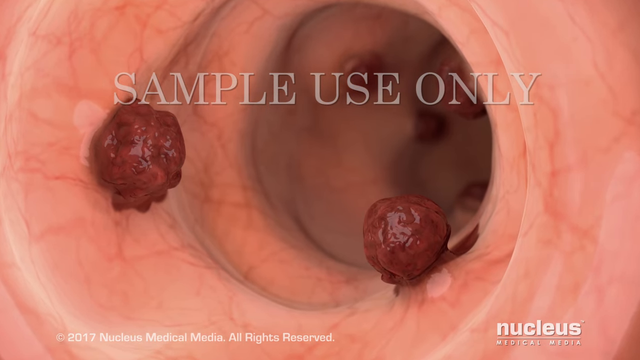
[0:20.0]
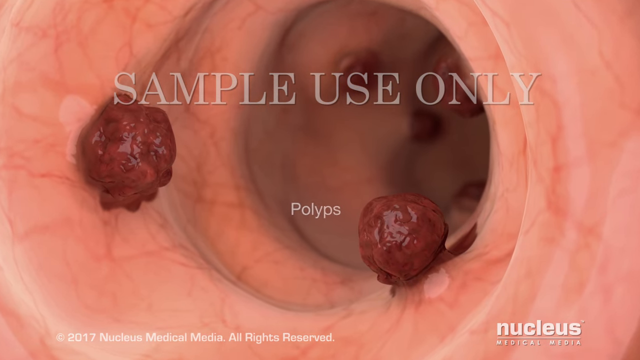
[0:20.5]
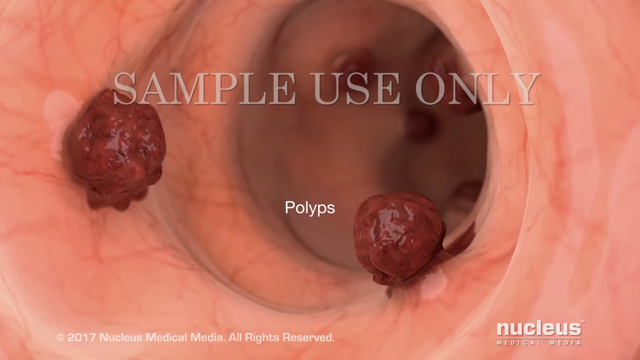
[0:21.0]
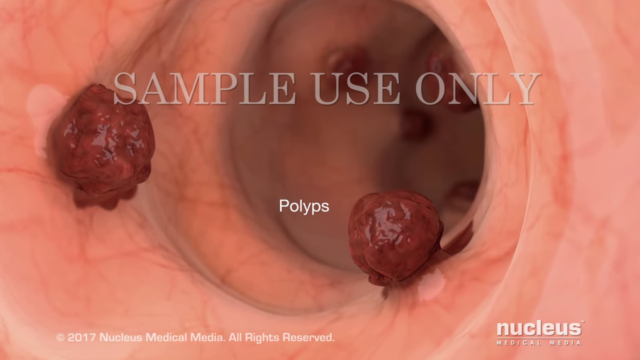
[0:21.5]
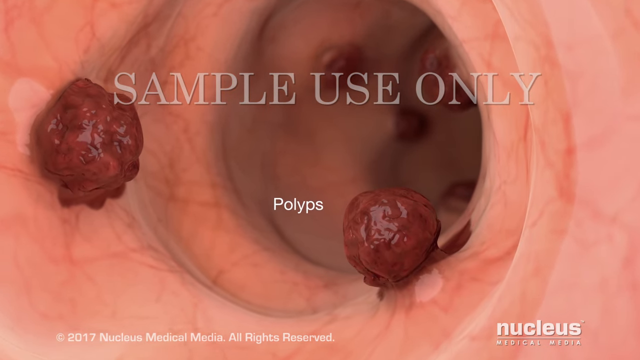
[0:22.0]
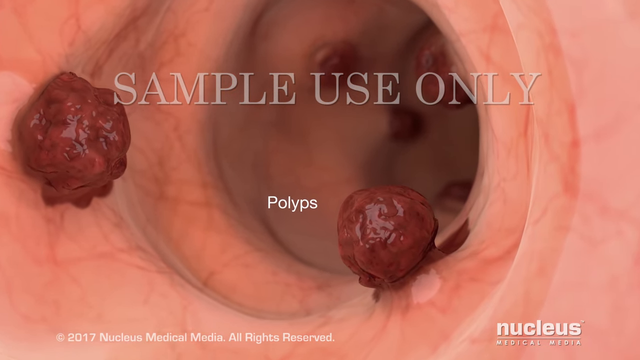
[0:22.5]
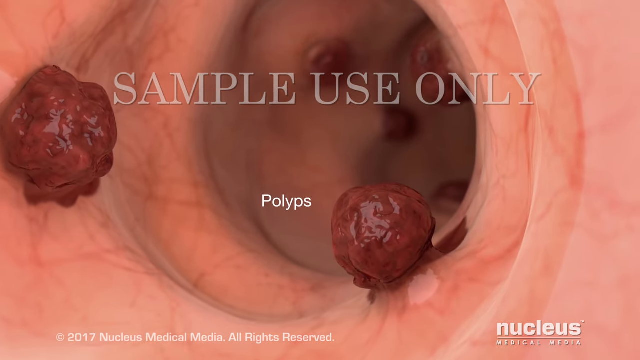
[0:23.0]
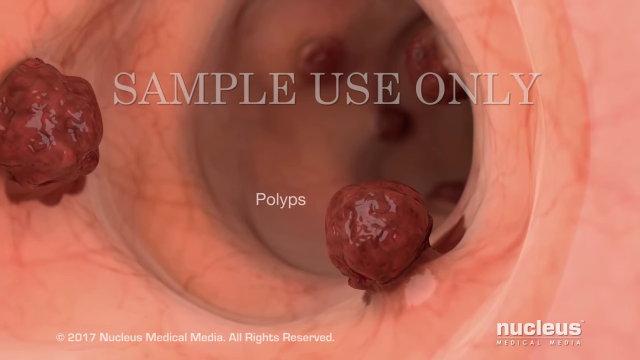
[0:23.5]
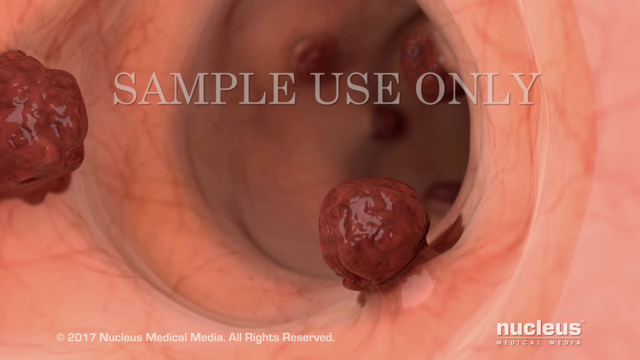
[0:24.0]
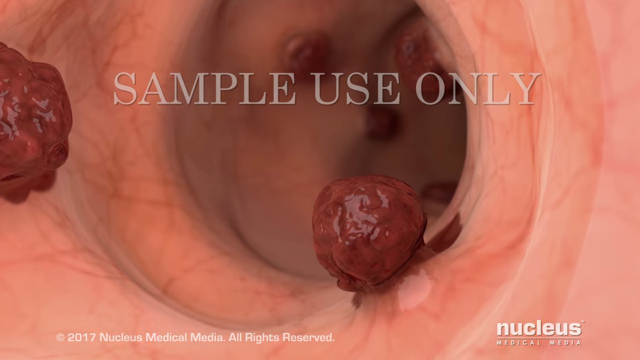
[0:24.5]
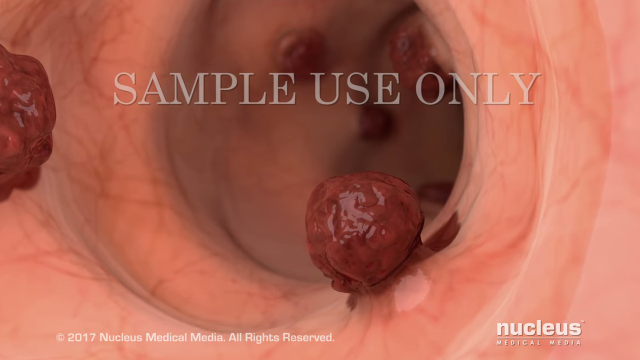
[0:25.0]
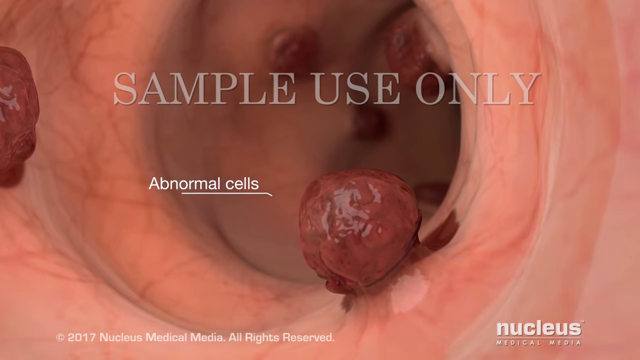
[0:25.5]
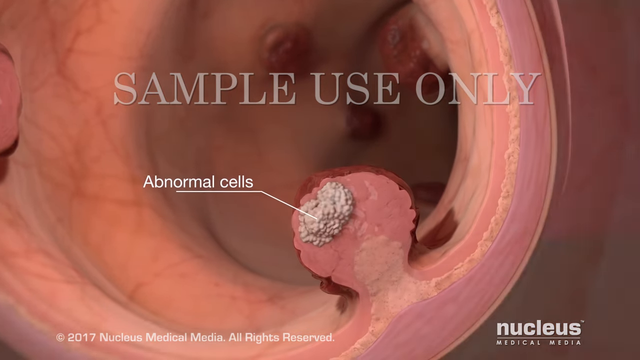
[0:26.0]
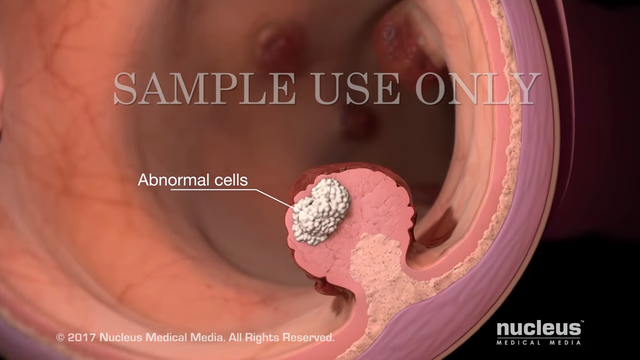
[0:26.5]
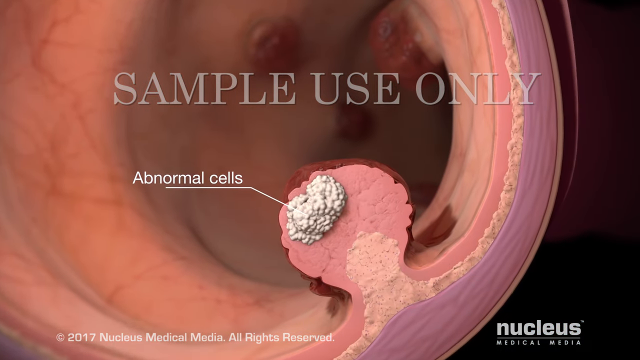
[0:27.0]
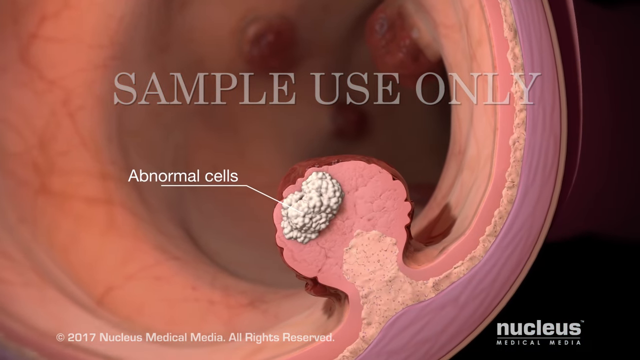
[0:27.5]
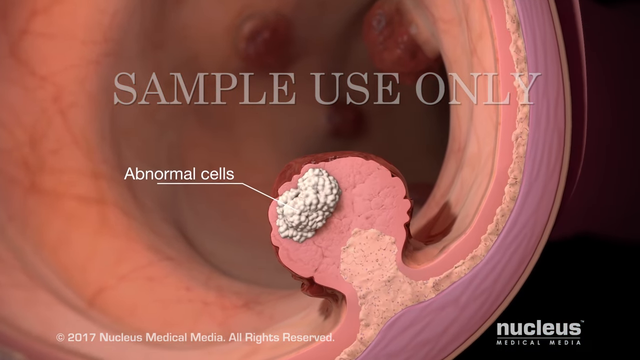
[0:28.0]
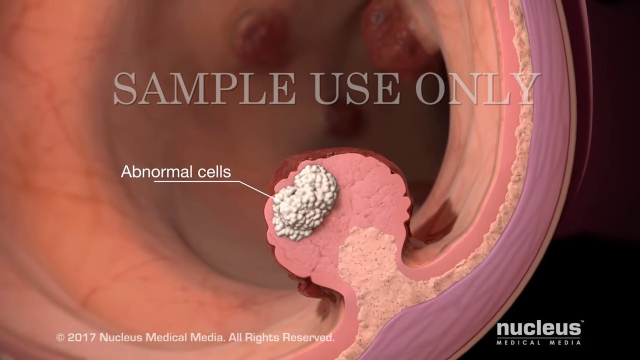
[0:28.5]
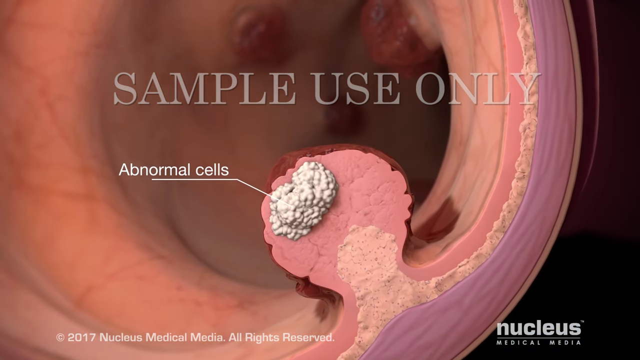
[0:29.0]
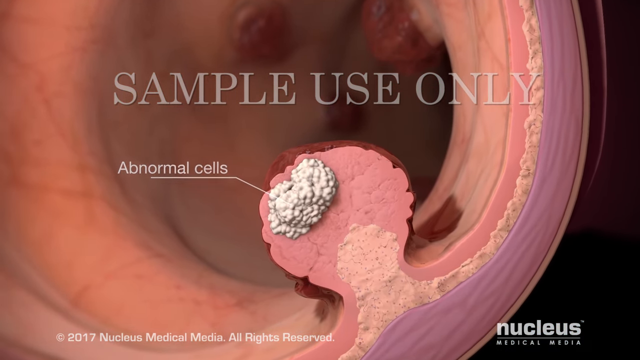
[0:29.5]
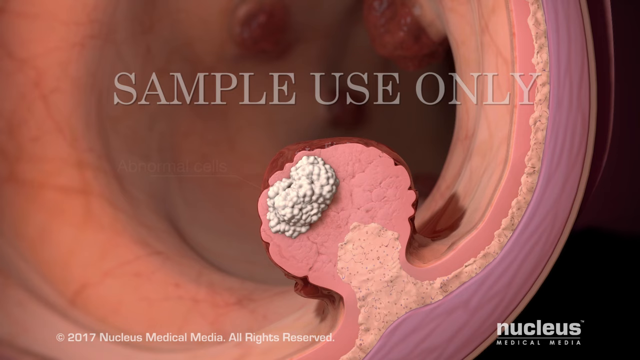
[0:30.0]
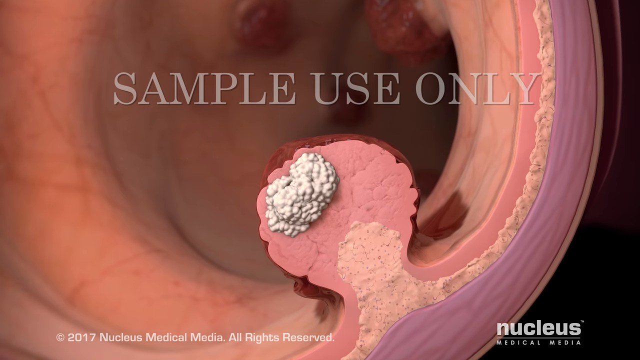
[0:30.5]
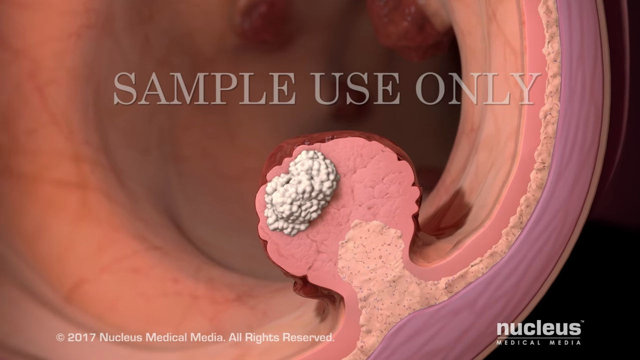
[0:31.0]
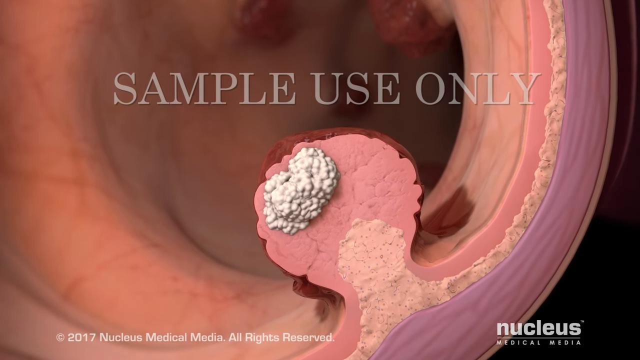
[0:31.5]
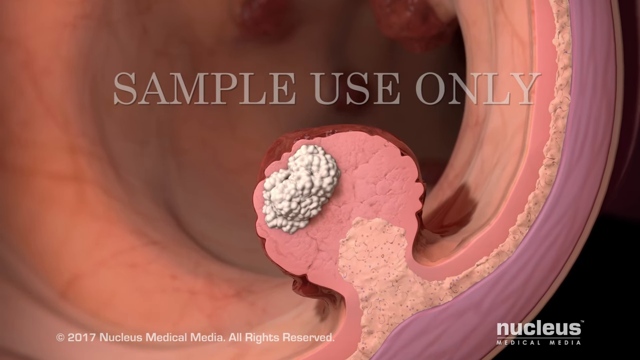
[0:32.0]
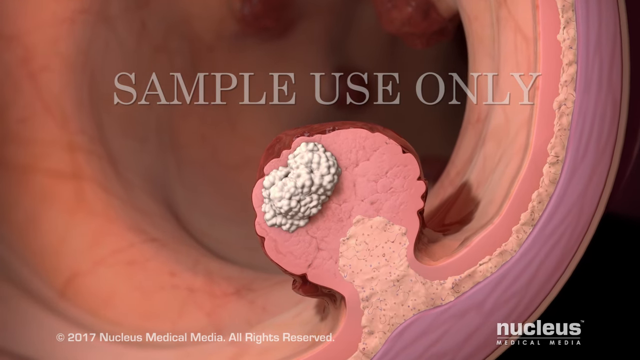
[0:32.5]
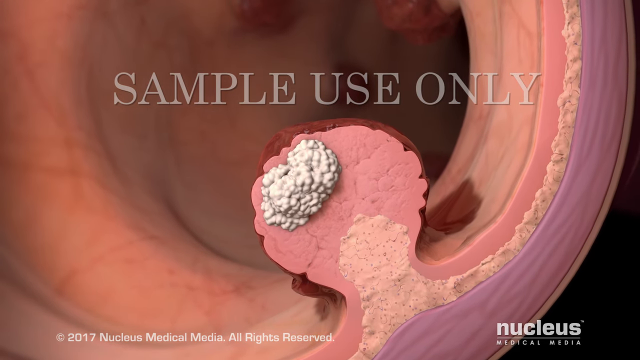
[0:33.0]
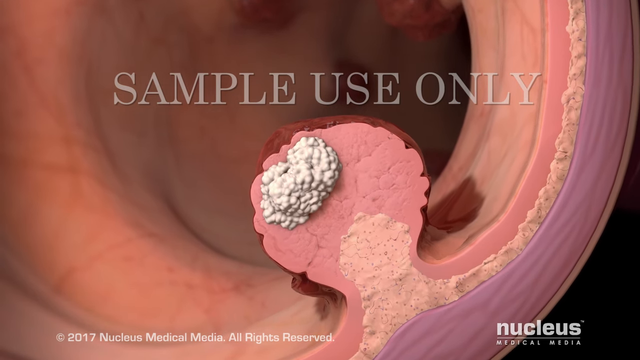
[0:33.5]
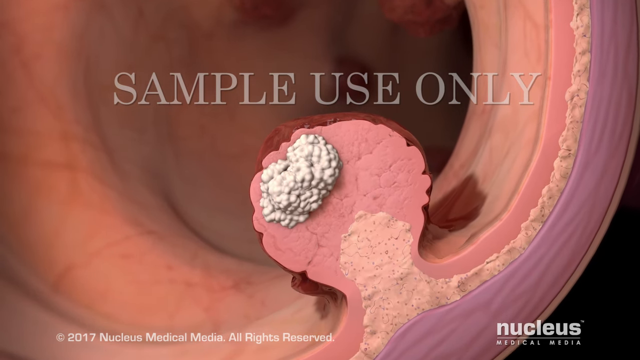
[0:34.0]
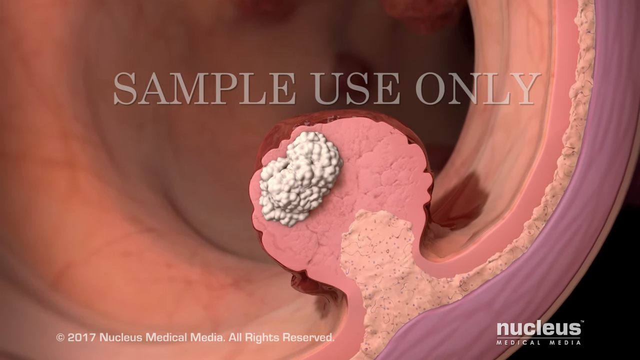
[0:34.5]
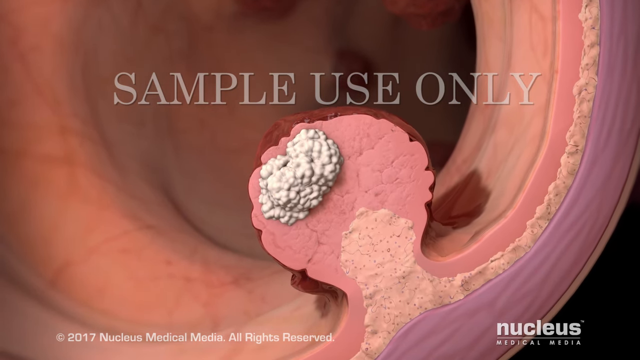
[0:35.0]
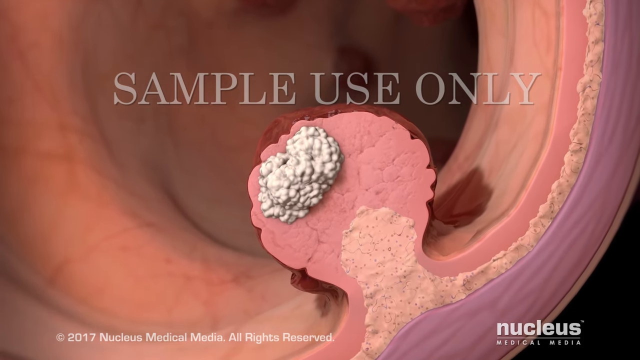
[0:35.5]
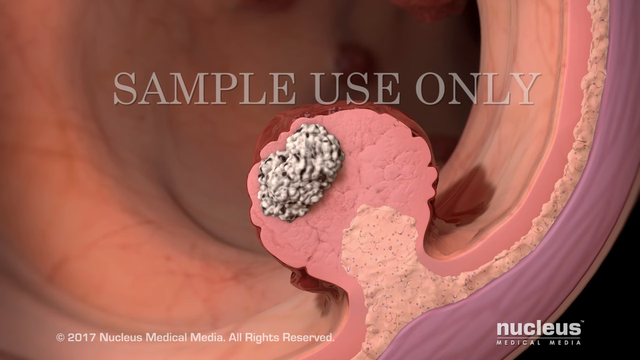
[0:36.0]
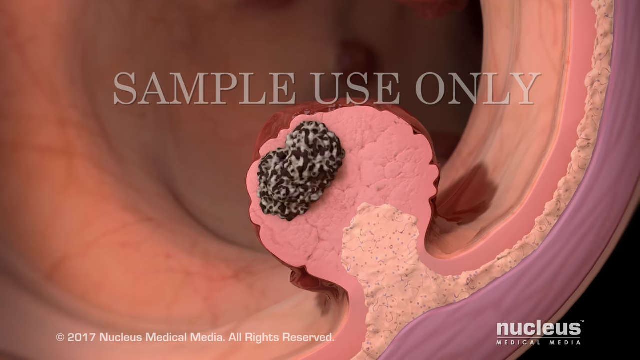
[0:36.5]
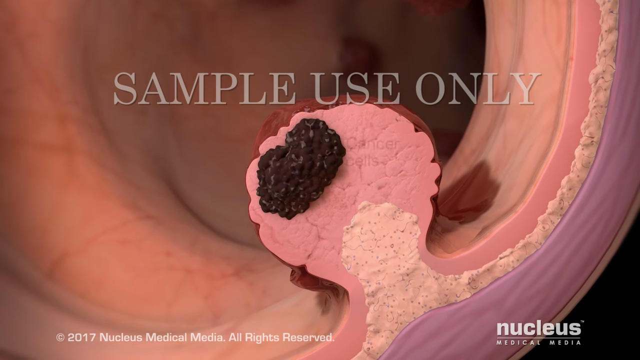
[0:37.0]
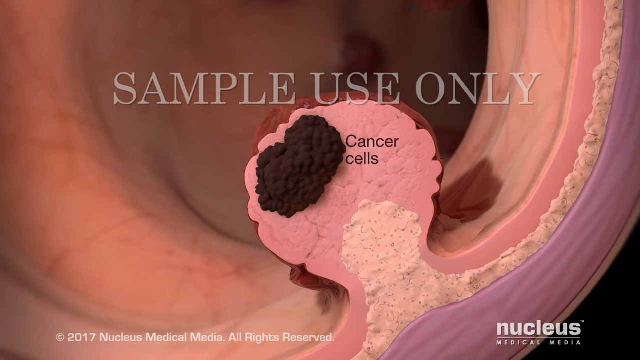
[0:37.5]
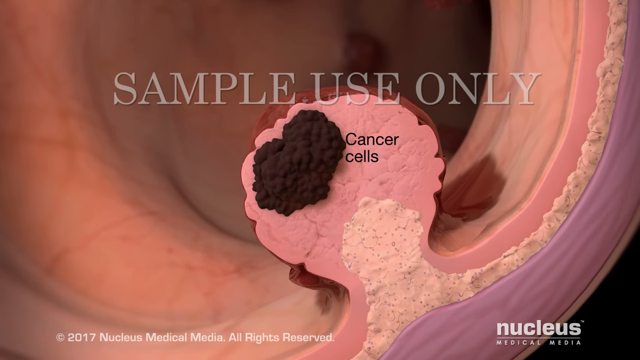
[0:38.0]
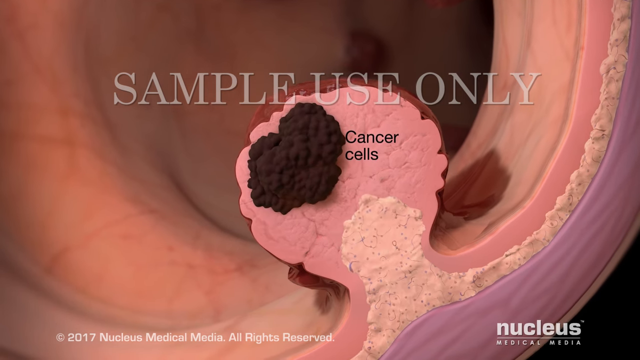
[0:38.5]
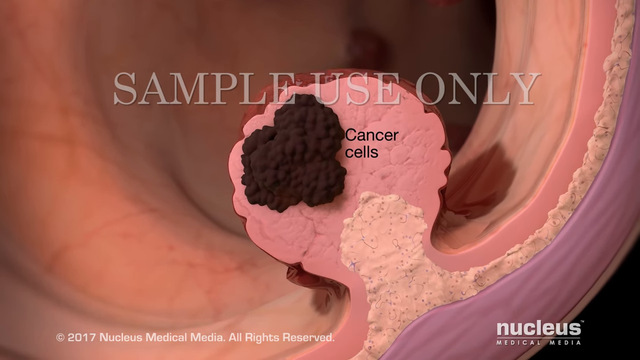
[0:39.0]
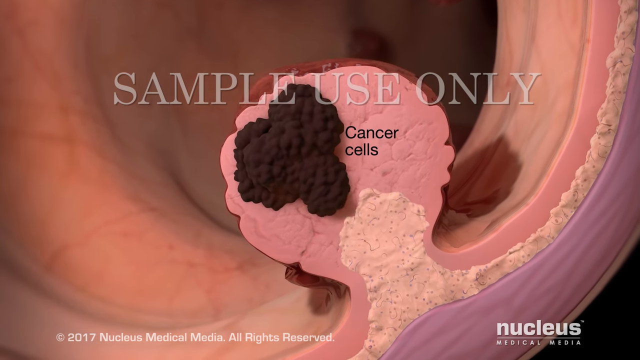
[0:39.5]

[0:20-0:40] A navy title card, lighter in the middle and darkening toward the edges, shows "sample use only" in gray capital letters at the top and "understanding colorectal cancer" in white beneath it, with "colorectal cancer" in bold. A diagram of a human body follows, and the view zooms in on the colon, the rectum and the anal canal as those names pop up on the screen, with each area highlighted in yellow. The phrase "sample use only" pops back up on the screen. The view zooms in on the anal canal, where there are about six polyps in the frame, then zooms in on one polyp to show its inside. A clump of white cells has an arrow pointing to it and white text reading "abnormal cells." The view keeps zooming in closer to show the different layers of the tissue, with "sample use only" still on screen. The white cells start growing, turn a dark brown color, and trail down toward the base of the polyp.